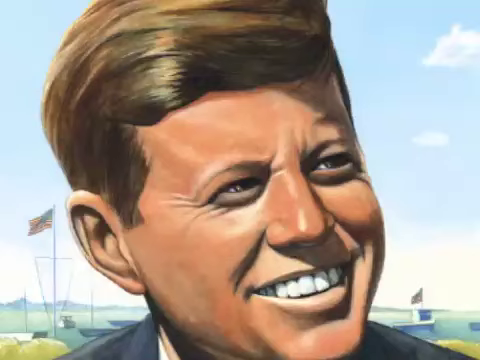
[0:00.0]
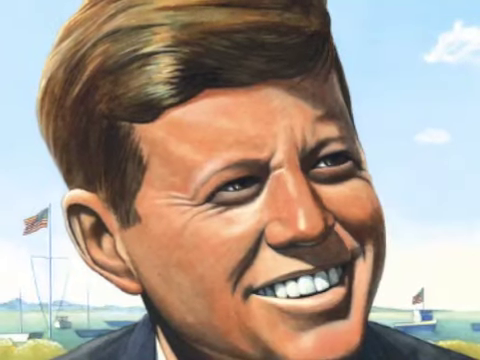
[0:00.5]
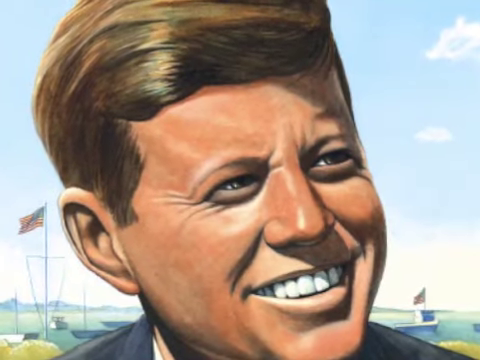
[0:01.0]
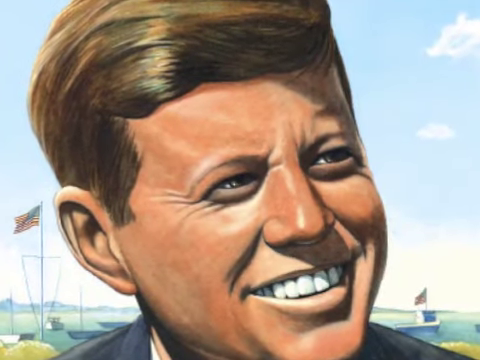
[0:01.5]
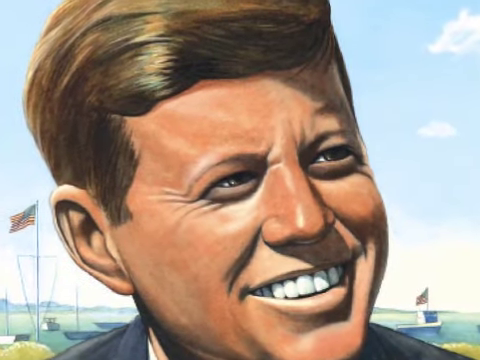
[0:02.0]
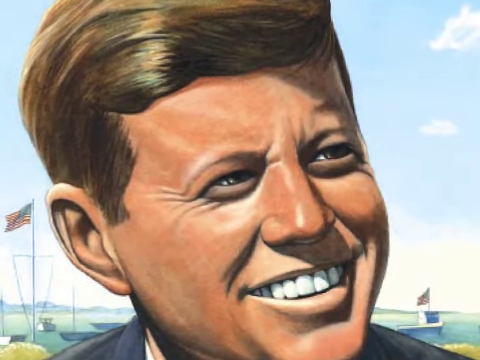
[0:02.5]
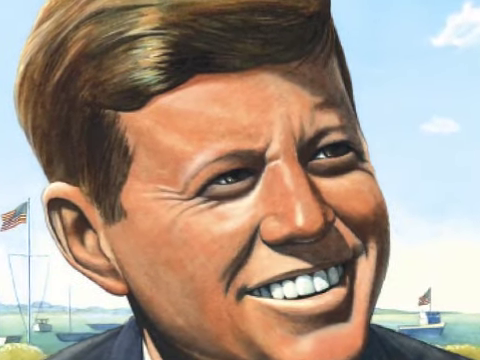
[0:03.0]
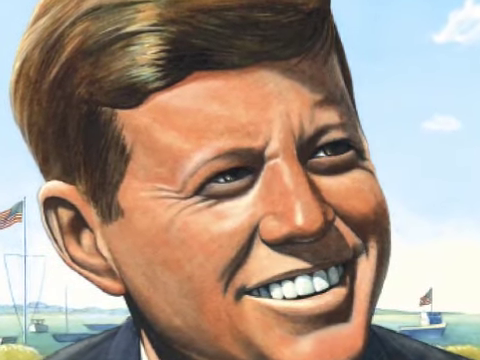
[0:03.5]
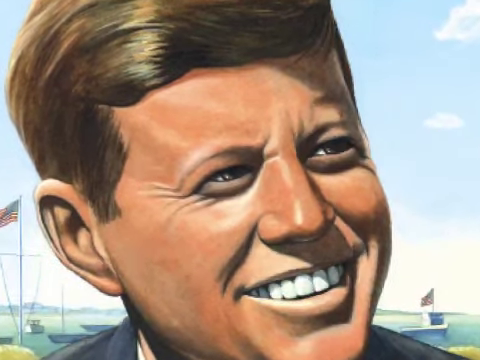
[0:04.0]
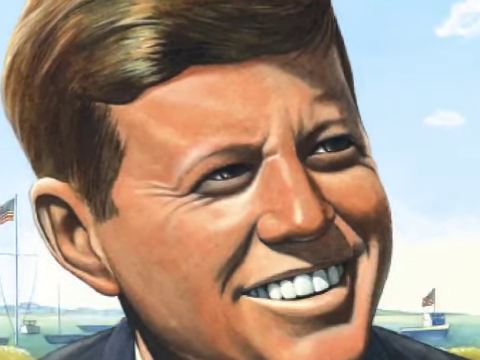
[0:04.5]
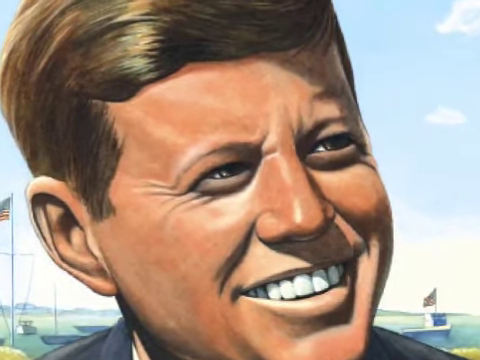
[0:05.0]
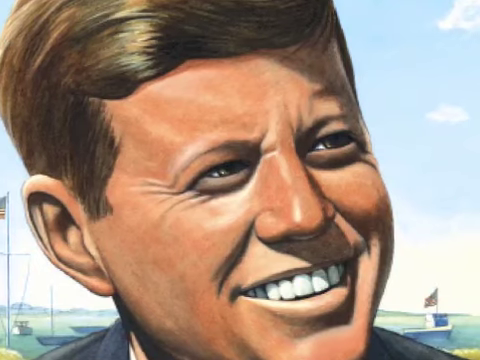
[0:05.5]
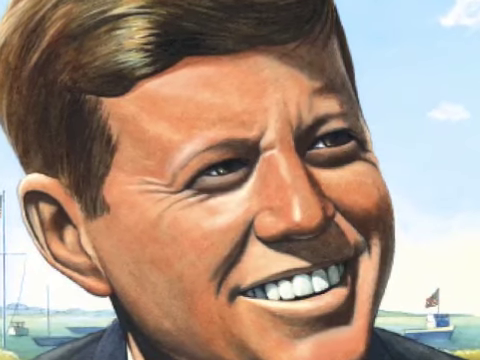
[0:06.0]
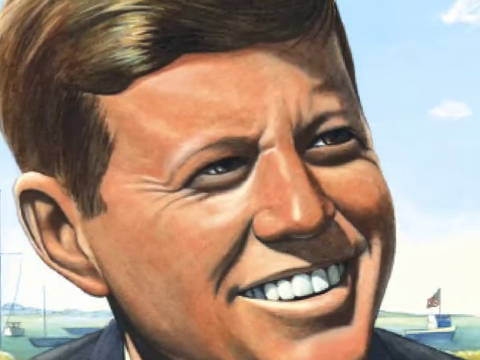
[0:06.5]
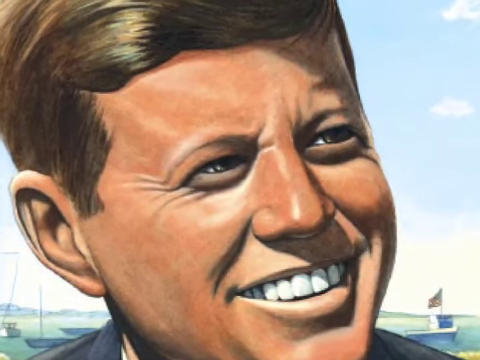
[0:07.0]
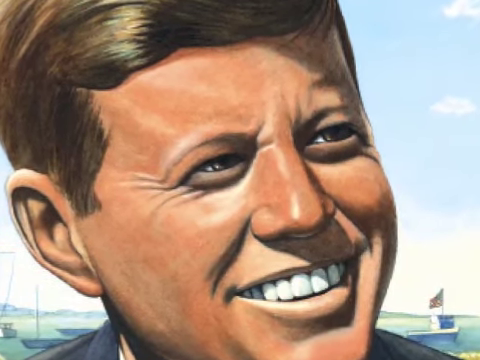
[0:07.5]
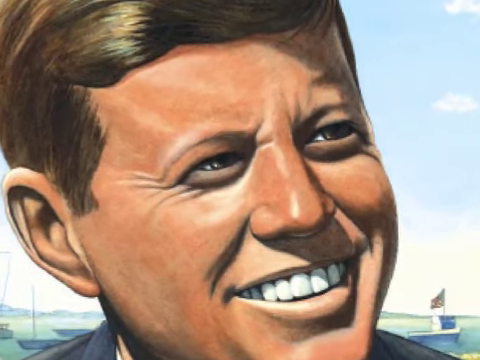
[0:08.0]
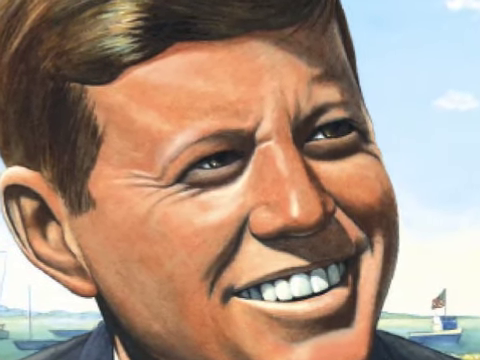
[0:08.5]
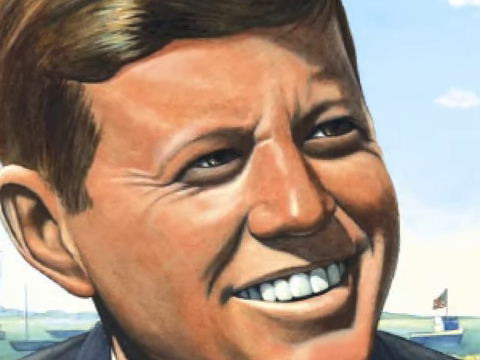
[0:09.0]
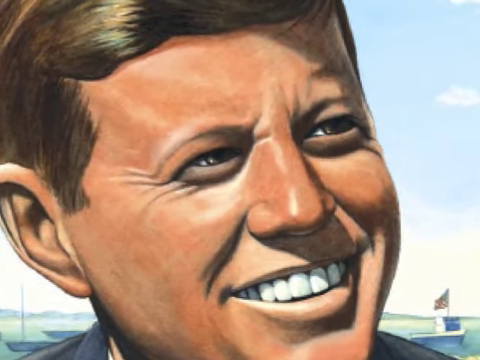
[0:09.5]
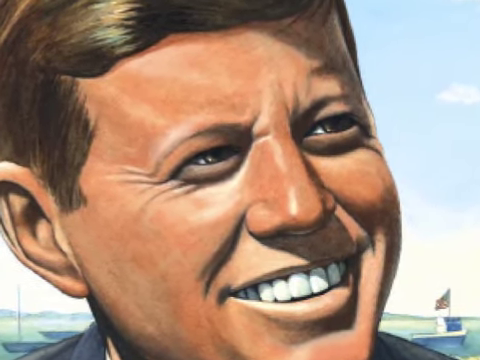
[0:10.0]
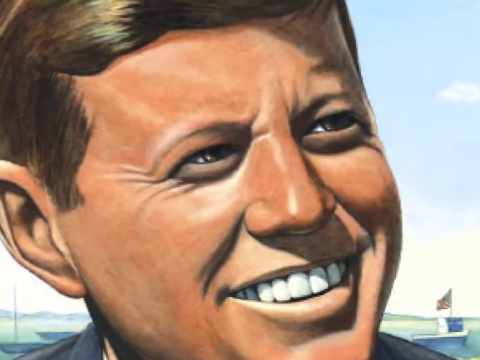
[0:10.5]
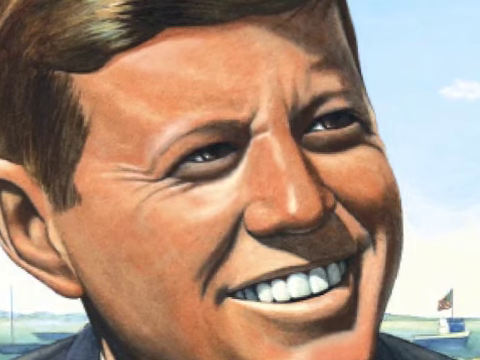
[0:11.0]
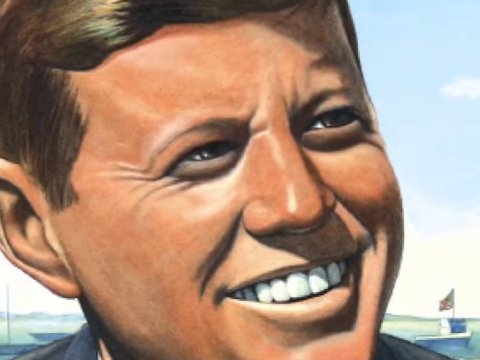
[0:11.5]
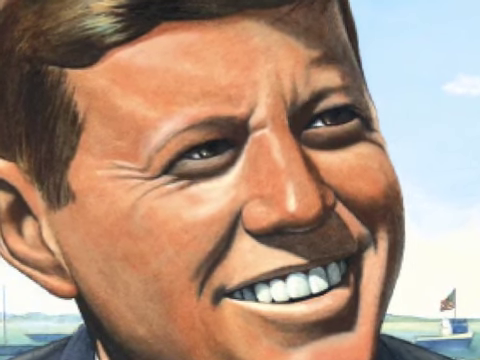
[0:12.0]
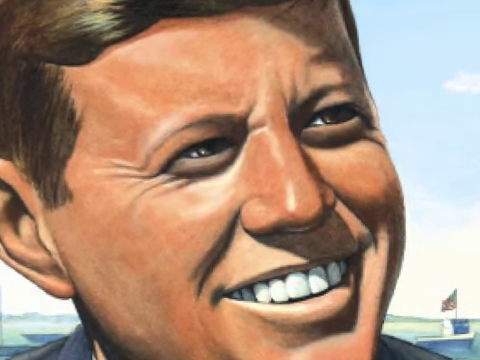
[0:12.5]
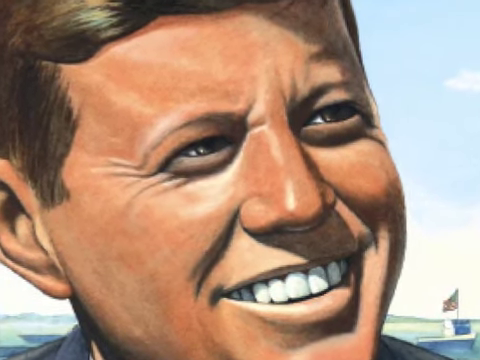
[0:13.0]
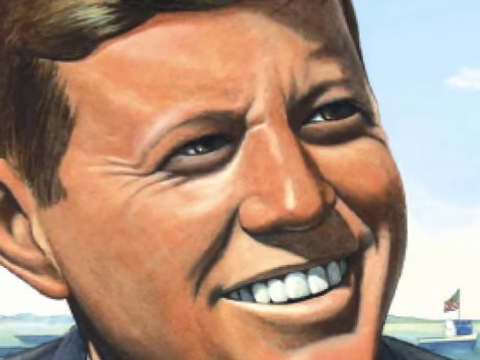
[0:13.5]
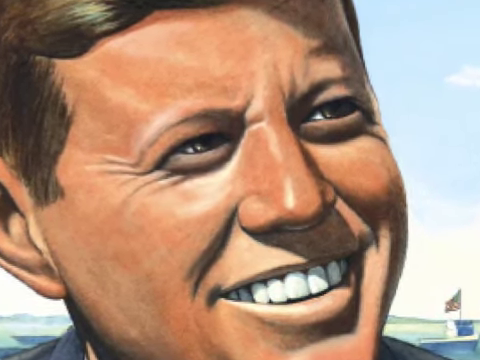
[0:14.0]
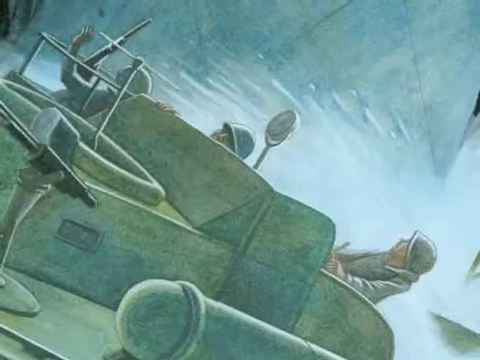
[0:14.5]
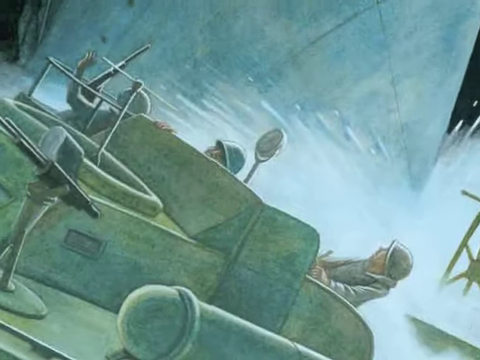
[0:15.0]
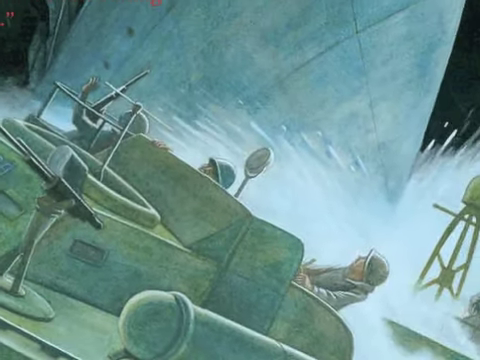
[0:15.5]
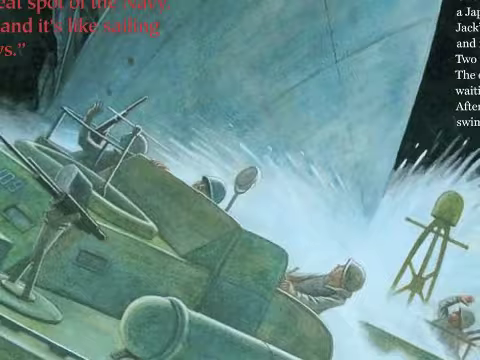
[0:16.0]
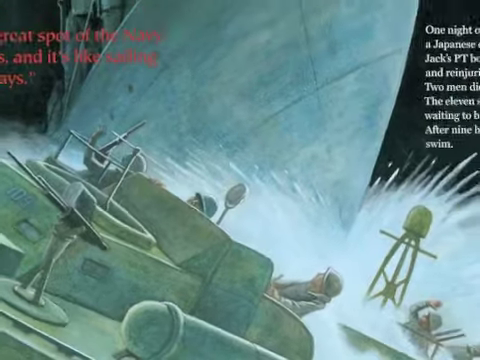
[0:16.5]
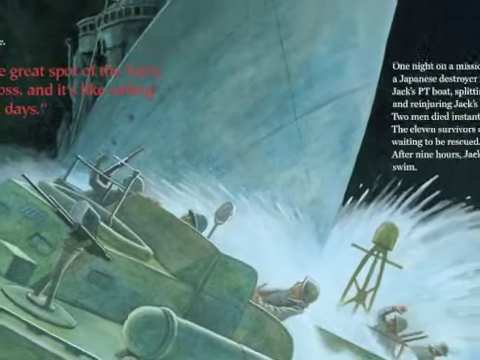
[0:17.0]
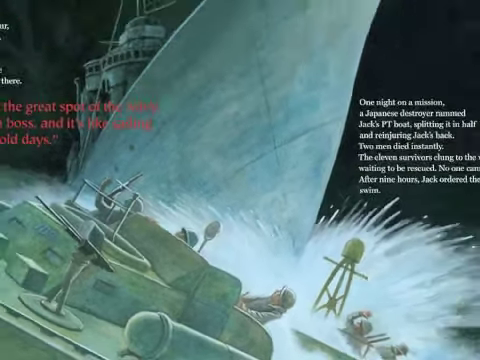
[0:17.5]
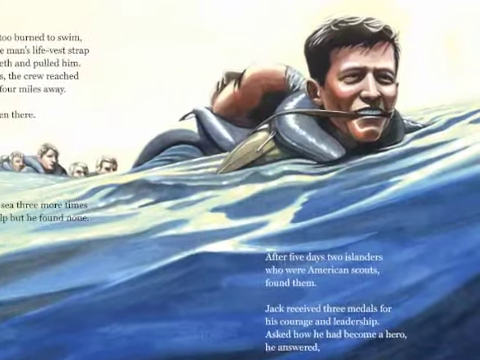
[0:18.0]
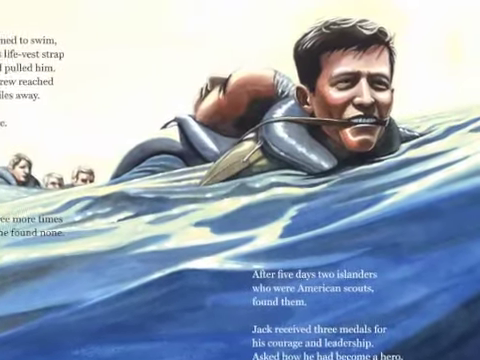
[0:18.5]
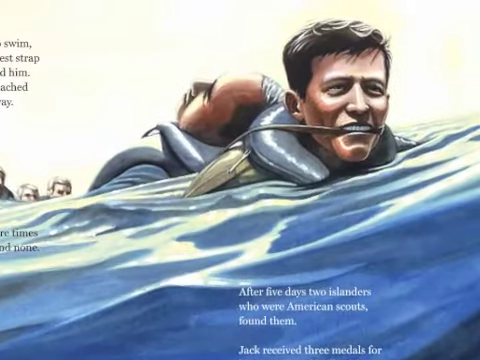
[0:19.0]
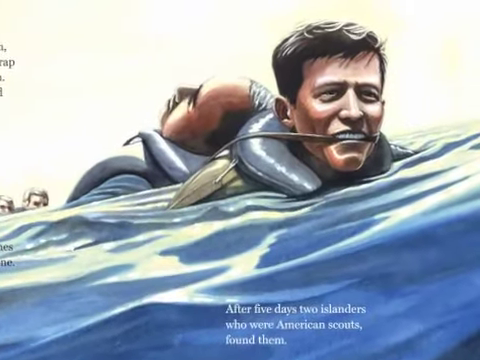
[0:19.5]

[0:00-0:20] A man with brown hair and a nice smile appears with an American flag behind him. He is smiling, showing very white teeth, and has a few wrinkles around his eyes. The photo is zoomed in more and more, and a second American flag is behind him. Next comes a sort of illustration with text that begins "one night on a mission" and mentions a Japanese destroyer splitting Jack's PT boat in half, with the words "two men died instantly." A sort of explosion is visible, and a man swims with something in his mouth under the words "after five days two islanders who were american scouts found them." The water is blue.